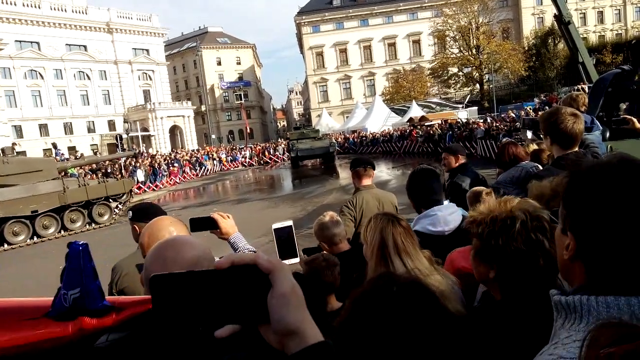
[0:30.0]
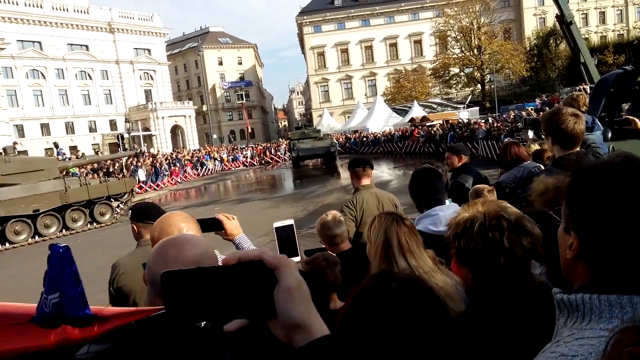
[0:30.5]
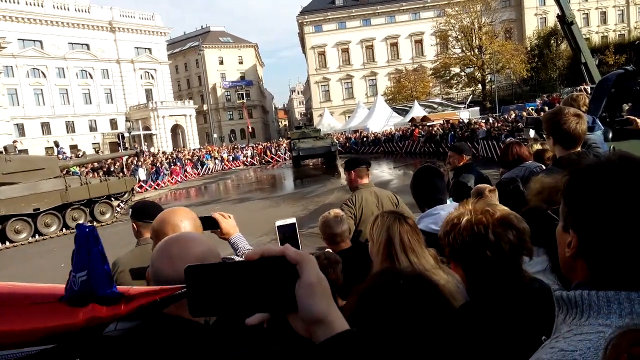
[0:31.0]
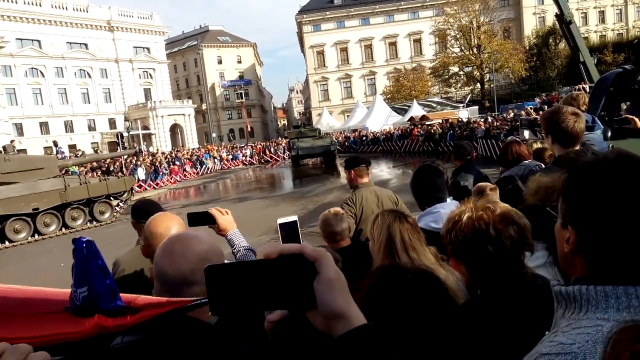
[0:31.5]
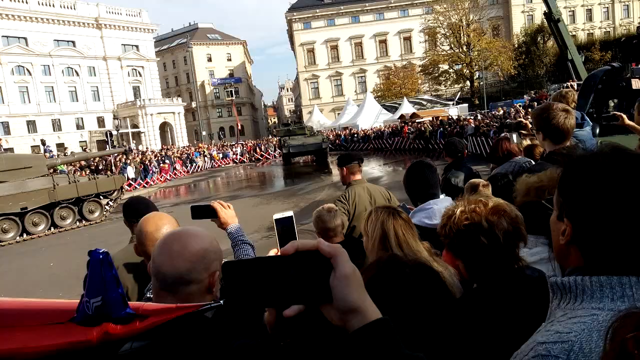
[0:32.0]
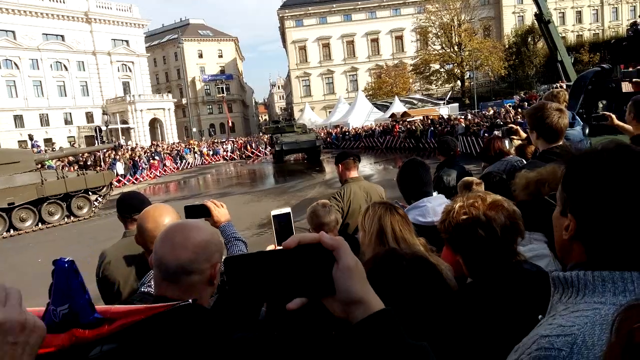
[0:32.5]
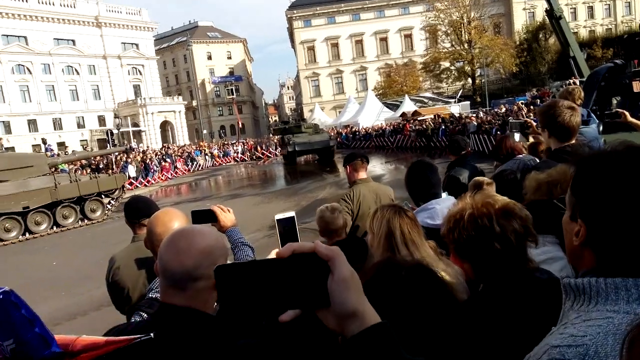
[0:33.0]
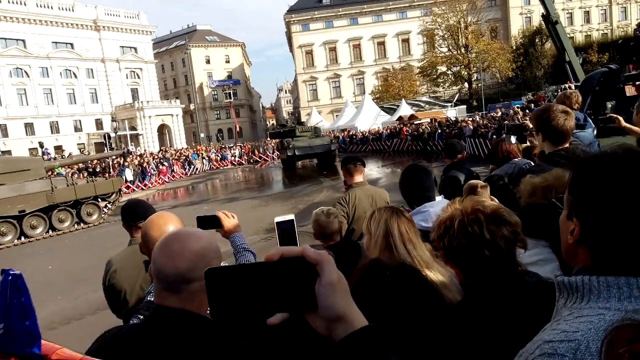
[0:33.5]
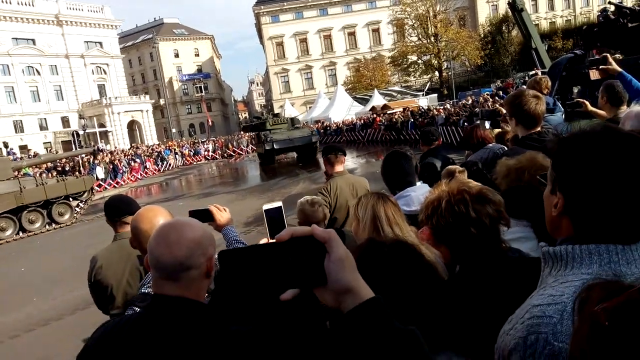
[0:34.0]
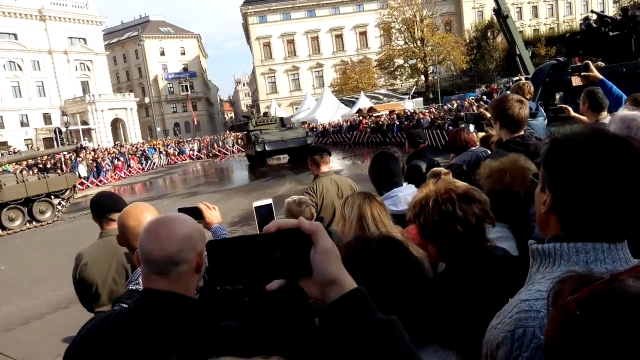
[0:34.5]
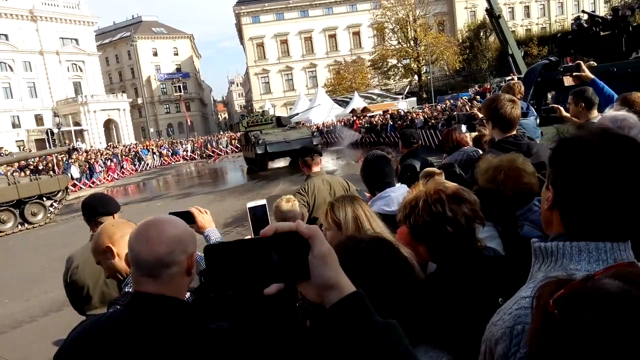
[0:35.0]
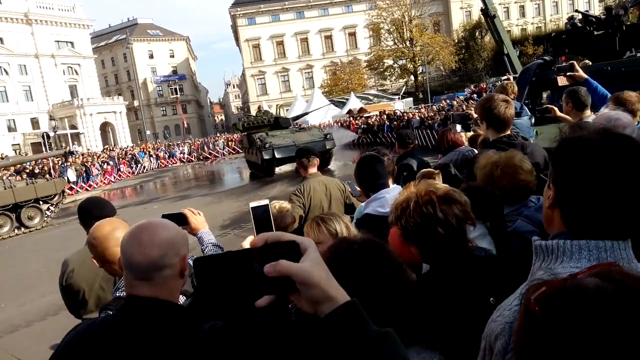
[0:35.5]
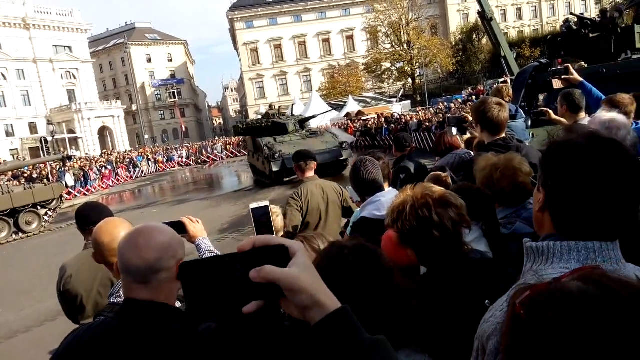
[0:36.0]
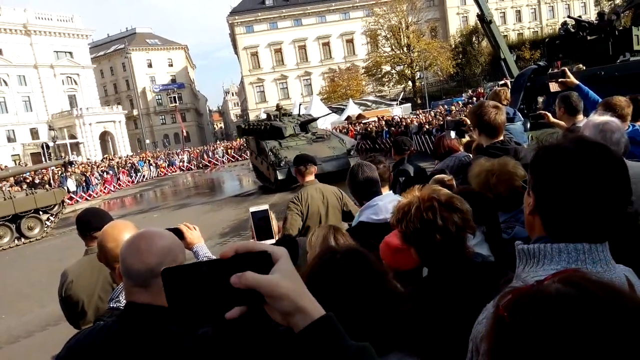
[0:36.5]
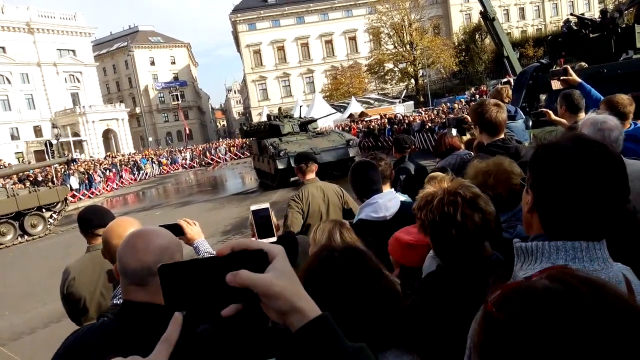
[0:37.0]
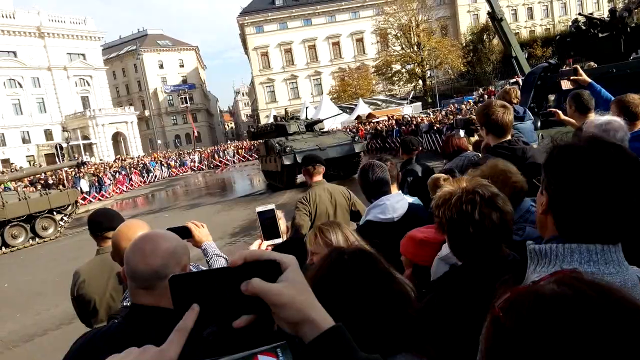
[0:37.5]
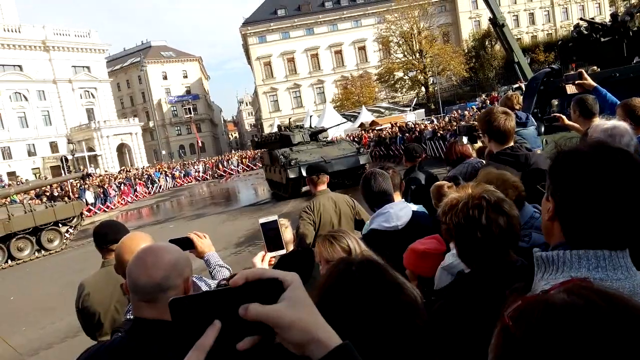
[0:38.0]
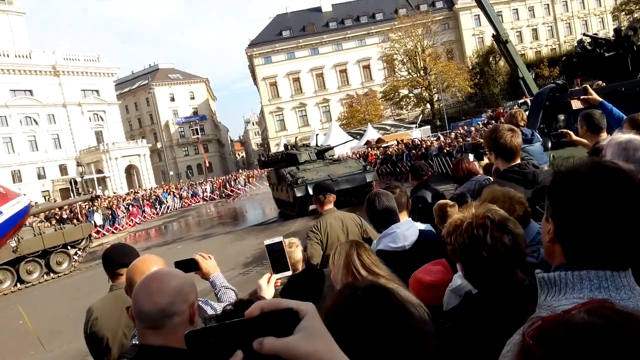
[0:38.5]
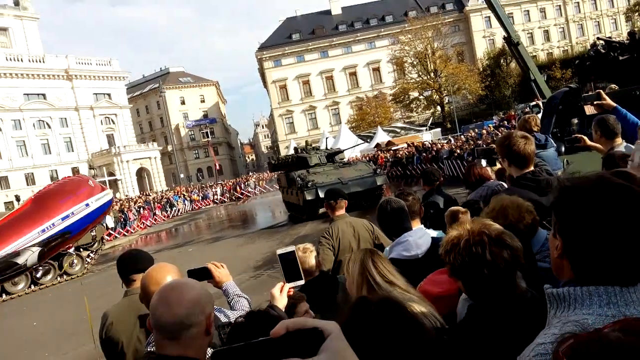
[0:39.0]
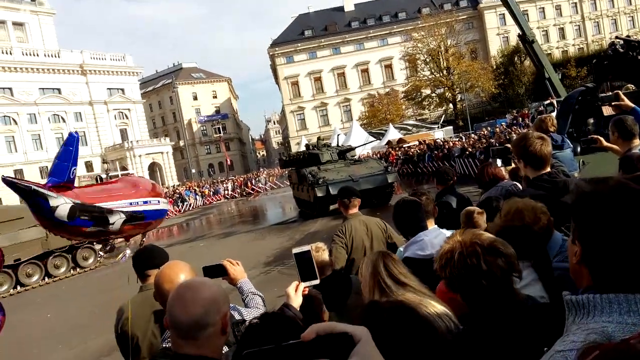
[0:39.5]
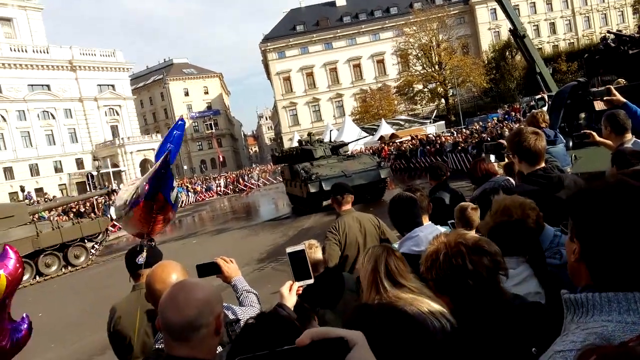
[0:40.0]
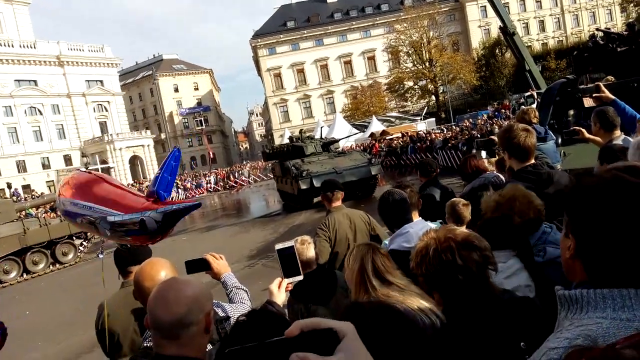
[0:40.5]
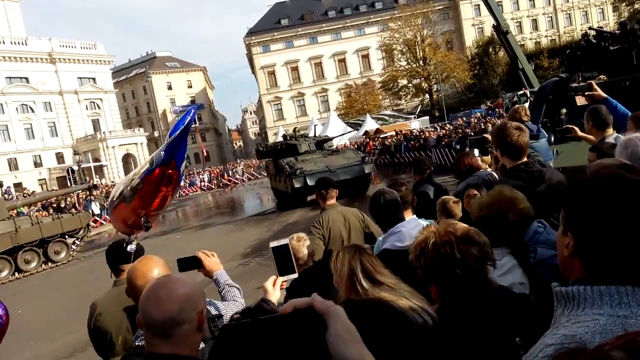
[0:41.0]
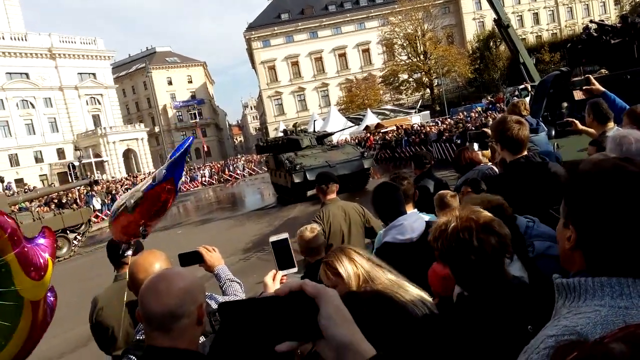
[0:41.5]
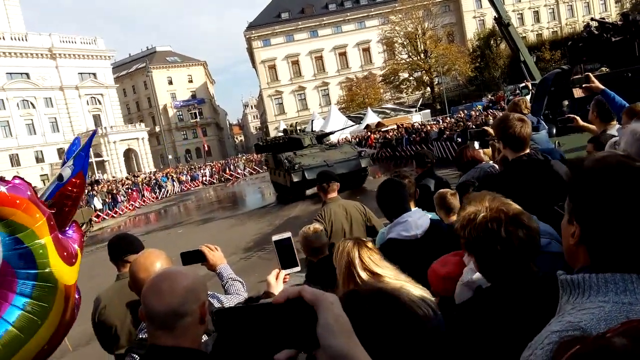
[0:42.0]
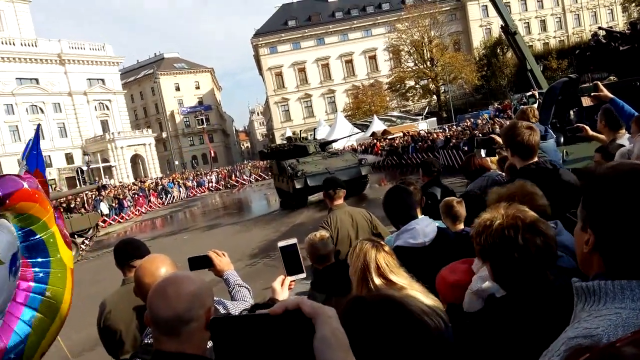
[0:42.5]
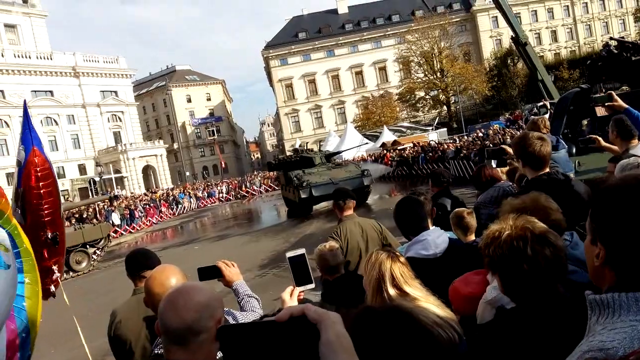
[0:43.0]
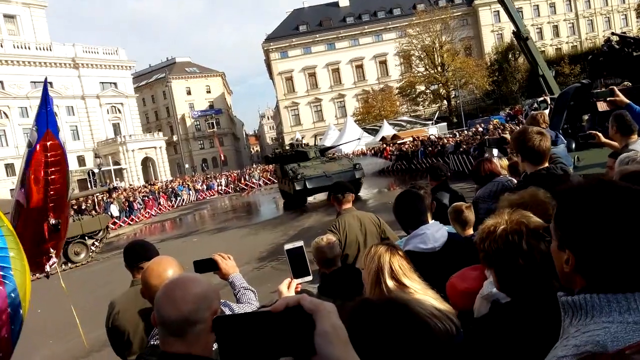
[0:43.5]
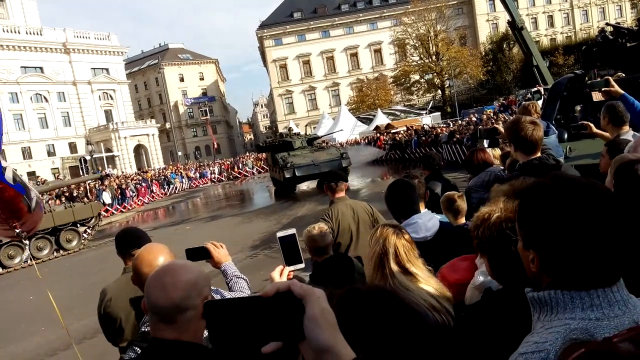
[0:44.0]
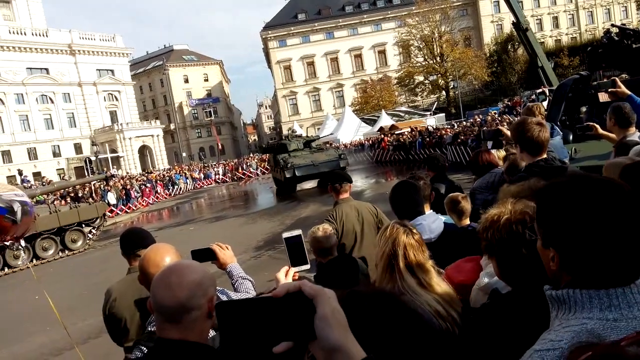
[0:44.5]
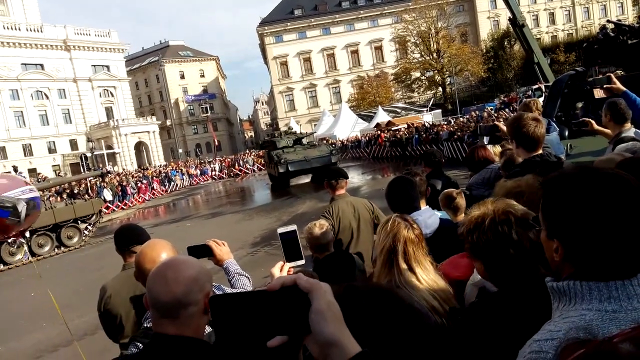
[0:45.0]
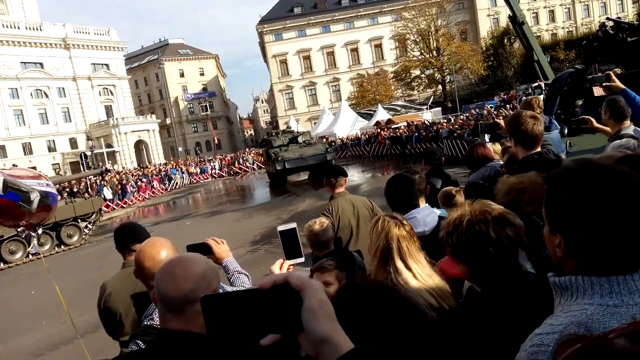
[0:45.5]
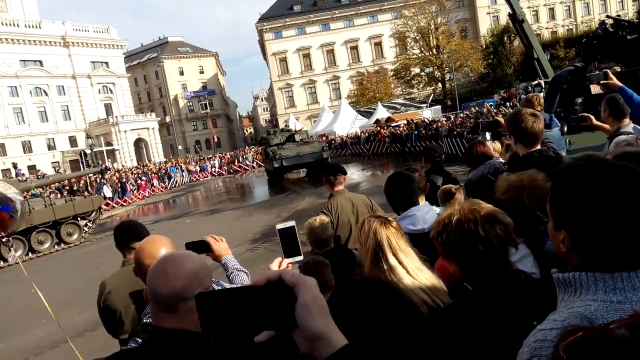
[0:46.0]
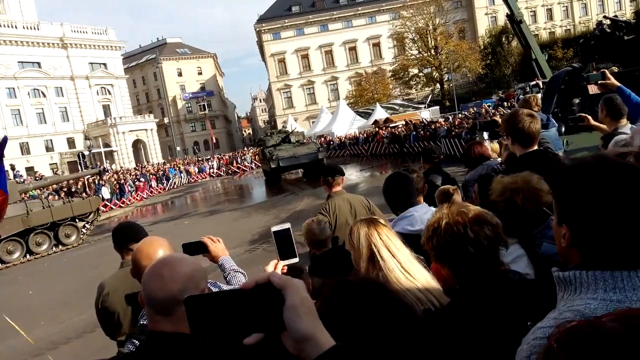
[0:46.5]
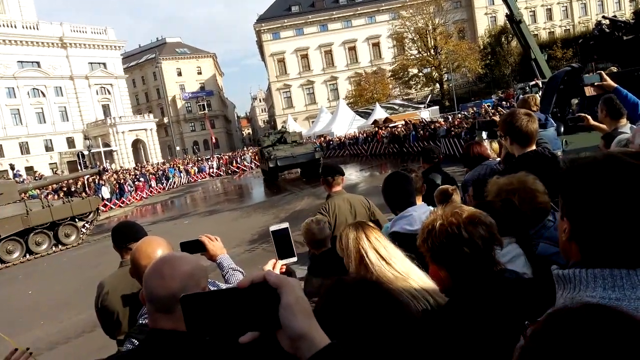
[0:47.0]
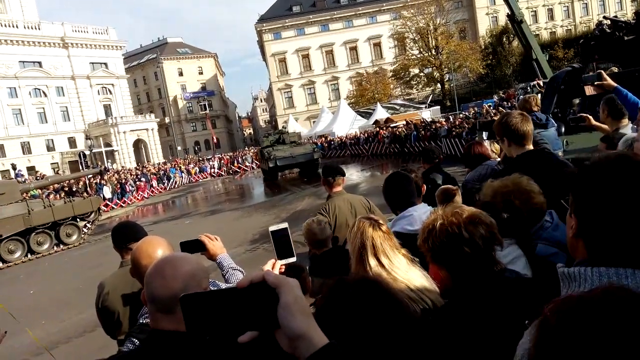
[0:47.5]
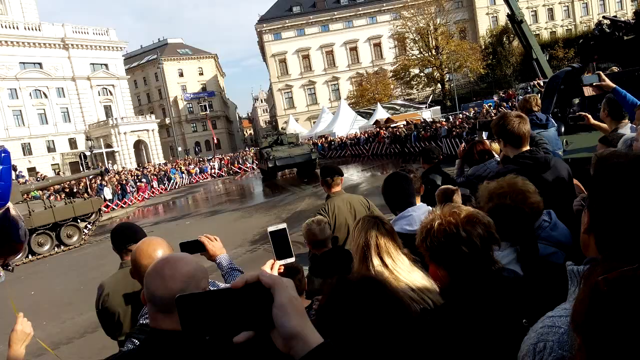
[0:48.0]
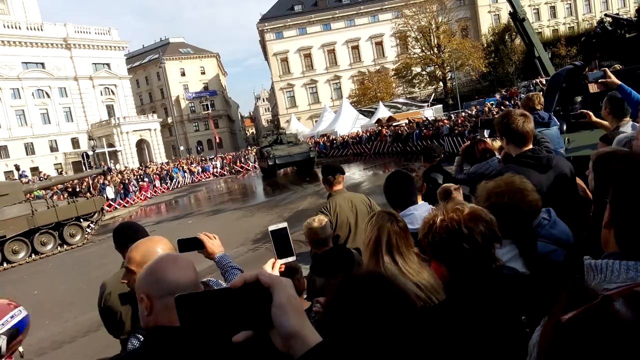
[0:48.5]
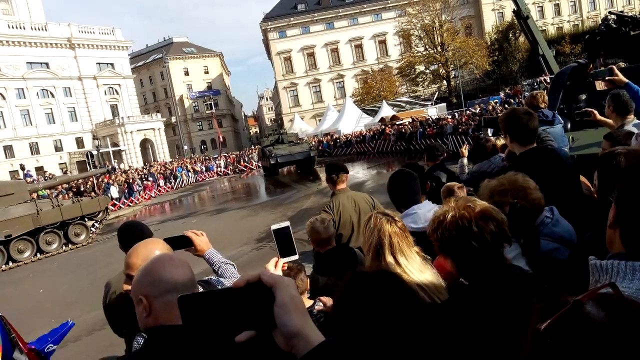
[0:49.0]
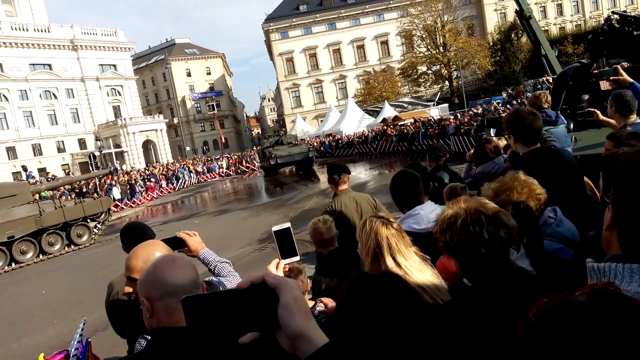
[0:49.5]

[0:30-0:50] The tank that has been rotating on the spot at the end of the parade ground seems to pause momentarily, then proceeds at quite some speed towards the crowd. It suddenly stops, the brakes going on, and the top section with the gun and the turret pivots forward. The tank pauses and reverses to its original position at the end of the parade ground. The road surface is still slick, and people in the crowd are still filming. At the start, someone's hand reaches up in the bottom left corner, for a reason not shown, possibly to move the balloon out of the way. The aircraft balloon is still bobbing around, the crowd appears the same as before, and the unidentified piece of machinery is still present in the top right corner.